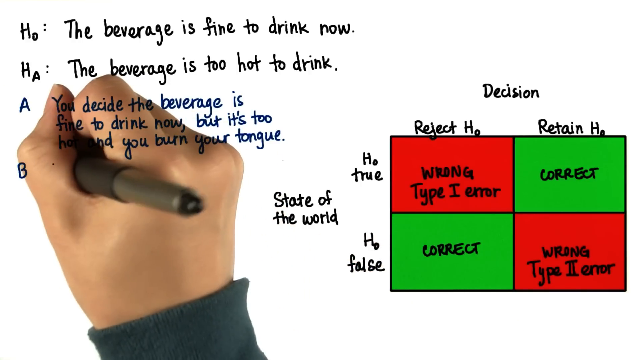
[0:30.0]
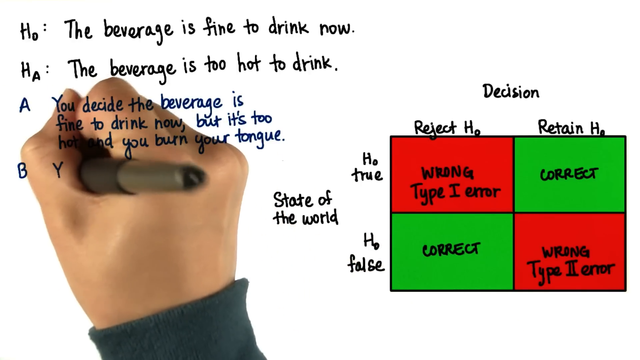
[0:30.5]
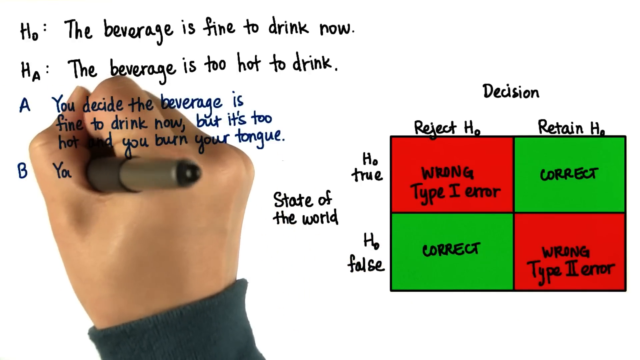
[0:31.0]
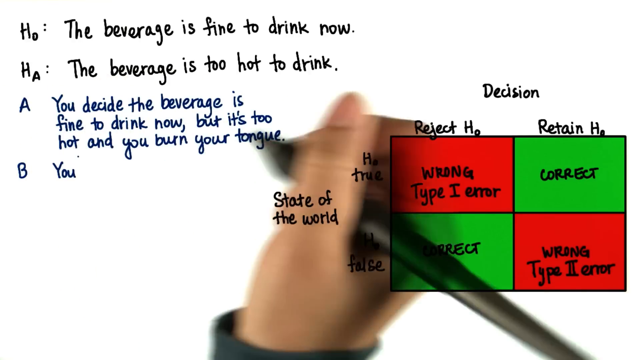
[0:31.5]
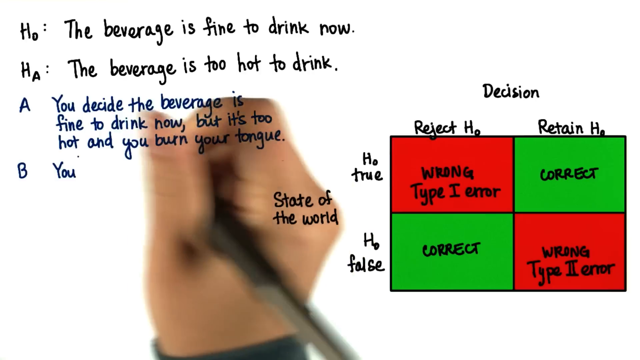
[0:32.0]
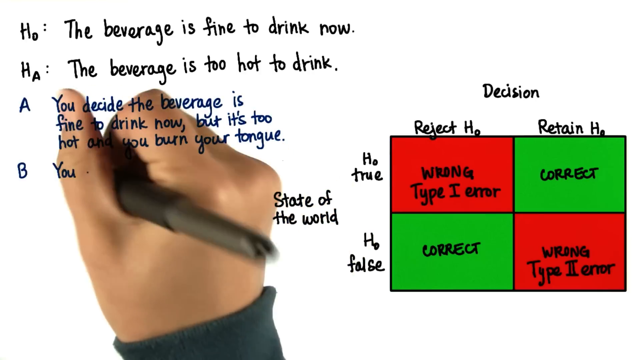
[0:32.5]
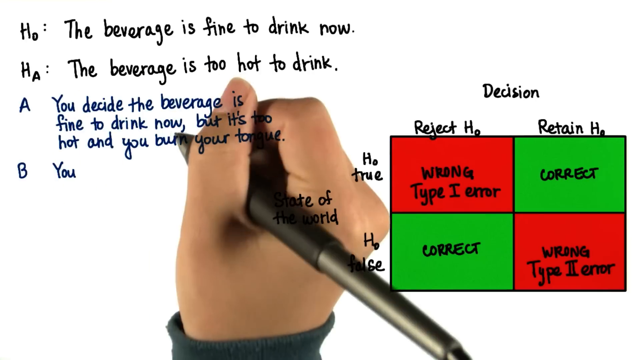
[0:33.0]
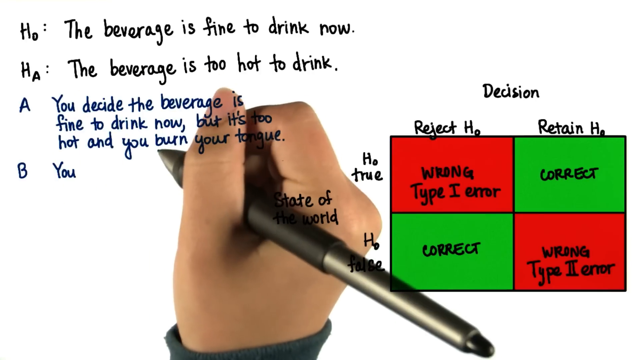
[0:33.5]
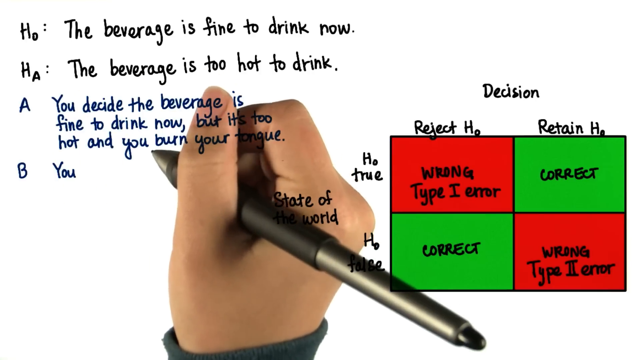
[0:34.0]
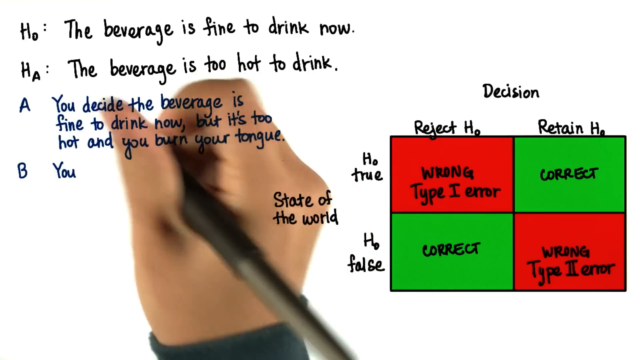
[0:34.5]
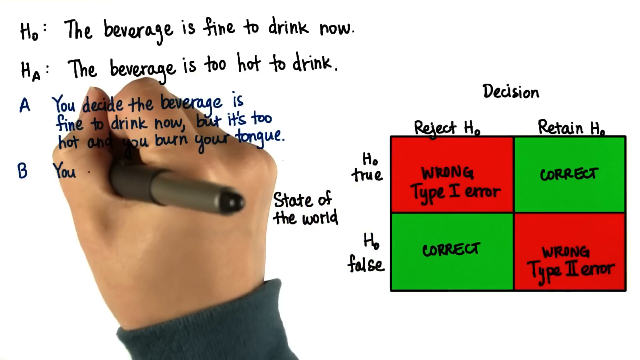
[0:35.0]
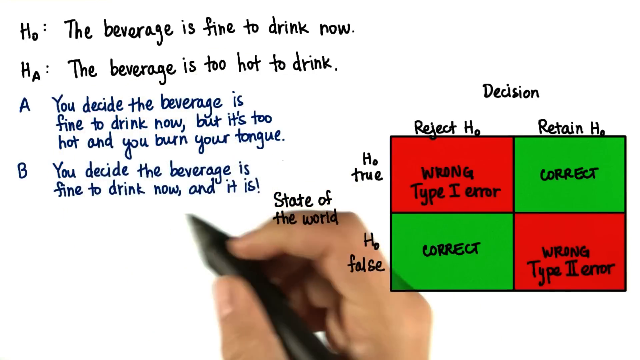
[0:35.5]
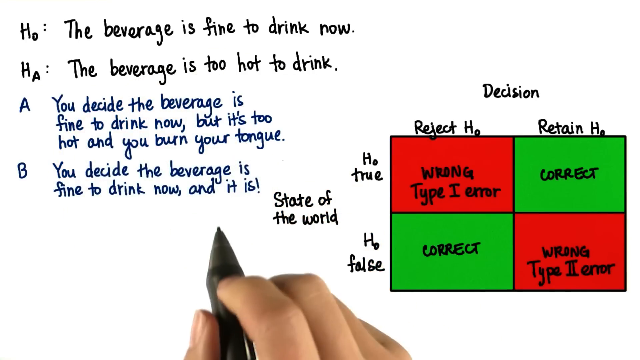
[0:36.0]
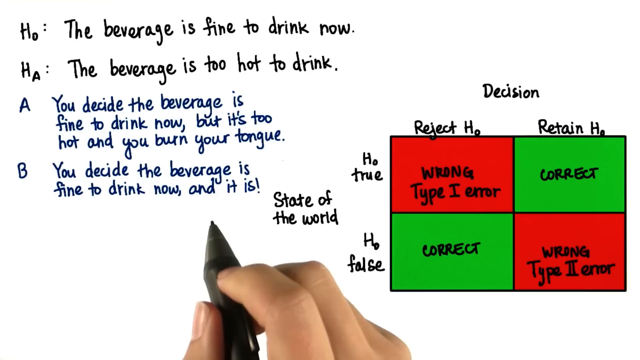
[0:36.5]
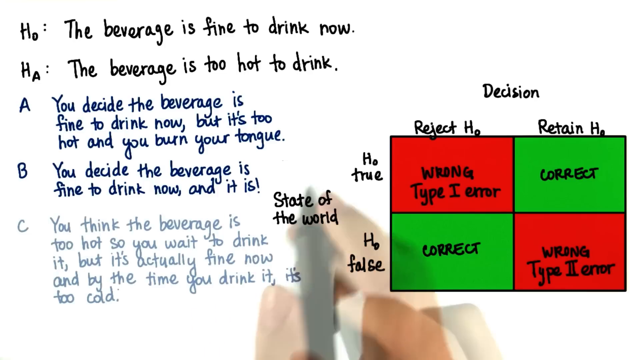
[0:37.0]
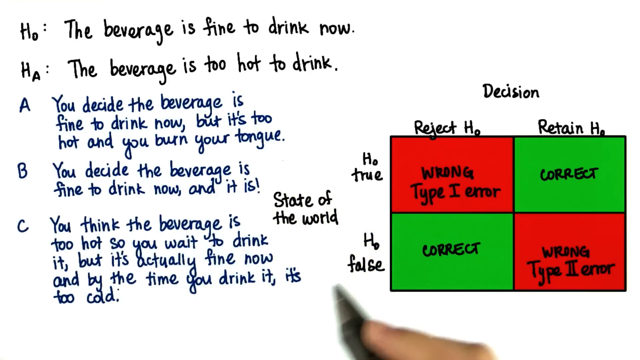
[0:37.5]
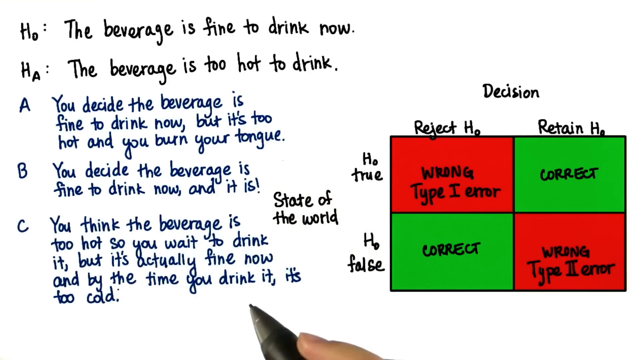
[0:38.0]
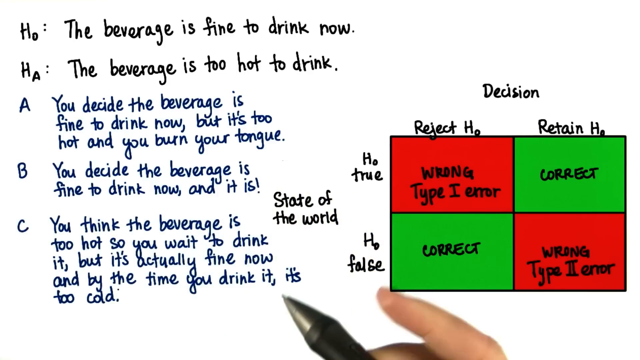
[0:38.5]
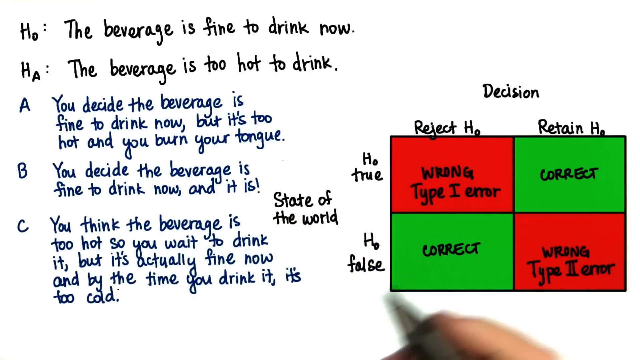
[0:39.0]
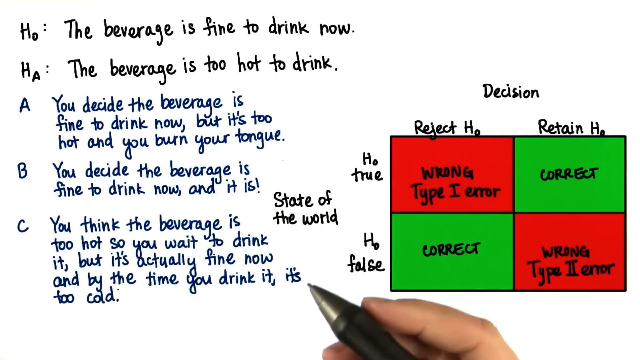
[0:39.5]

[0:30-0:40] The sentence after "you" is expanded to read "you decide the beverage is fine to drink now and it is!", with an exclamation mark at the end, written in blue. The hand moves down to the bottom of the screen, where only the finger and thumb holding the black pen are visible. Another line is written: "C", underneath "B". To its right it says "you think the beverage is too hot so you wait to drink it but it's actually fine now and by the time you drink it it's cold", written in blue like the previous two.